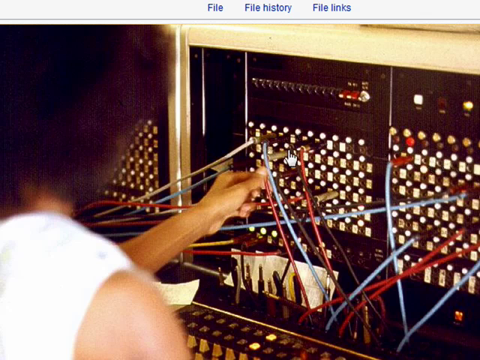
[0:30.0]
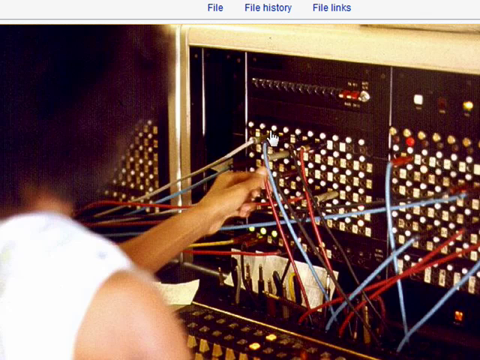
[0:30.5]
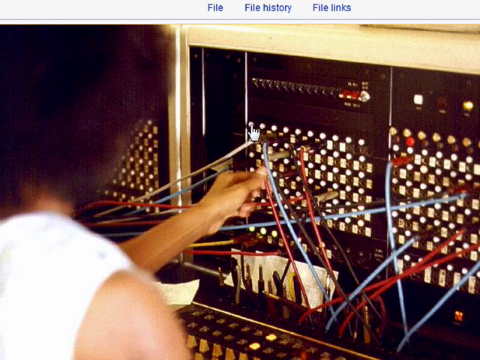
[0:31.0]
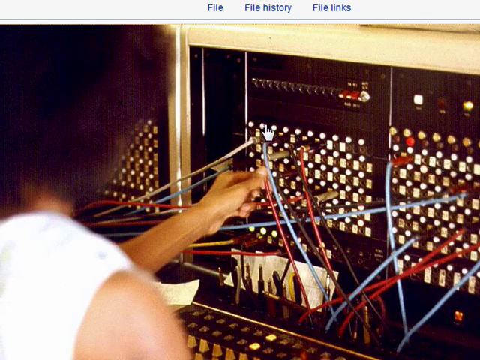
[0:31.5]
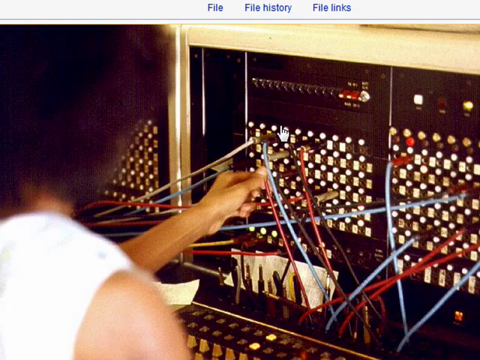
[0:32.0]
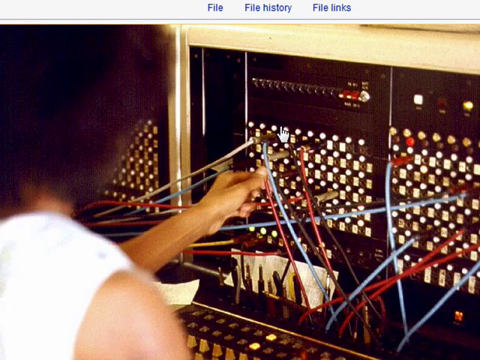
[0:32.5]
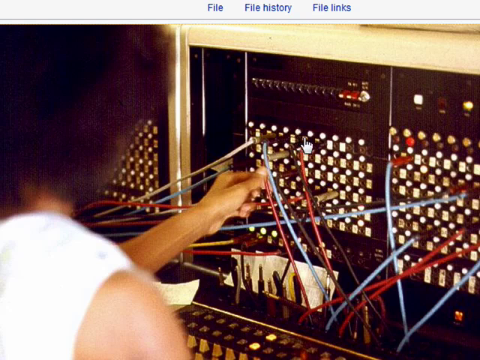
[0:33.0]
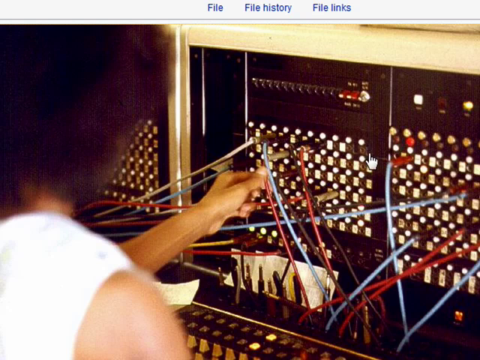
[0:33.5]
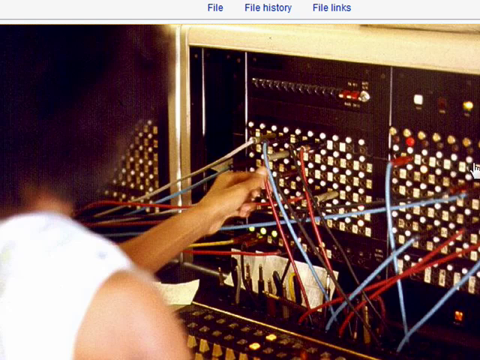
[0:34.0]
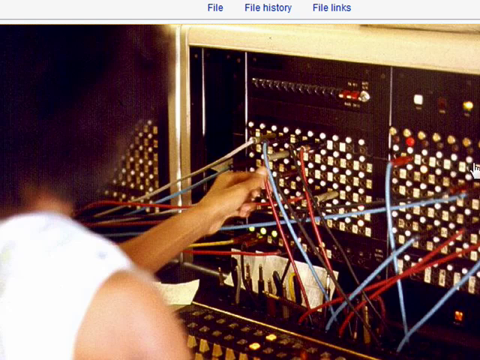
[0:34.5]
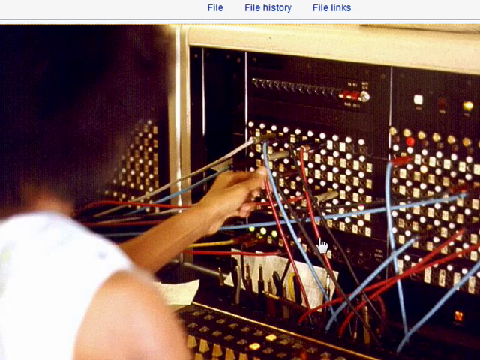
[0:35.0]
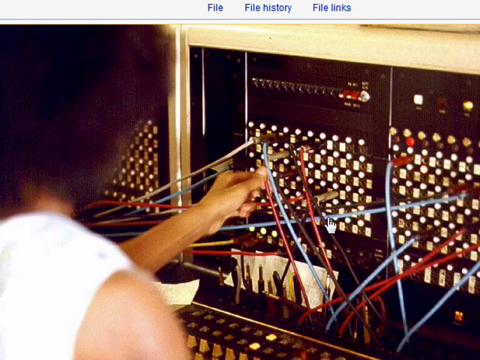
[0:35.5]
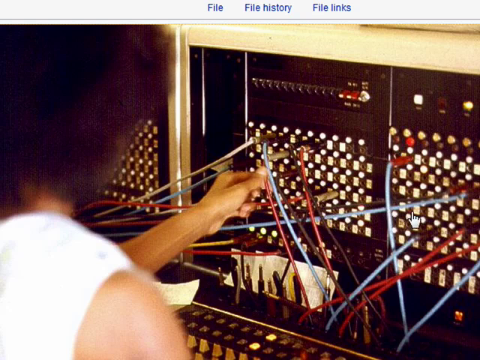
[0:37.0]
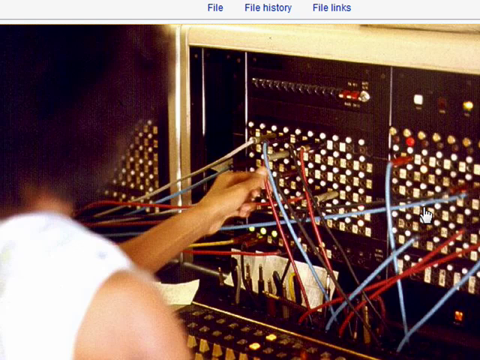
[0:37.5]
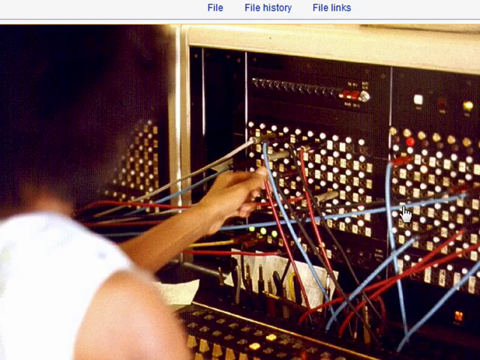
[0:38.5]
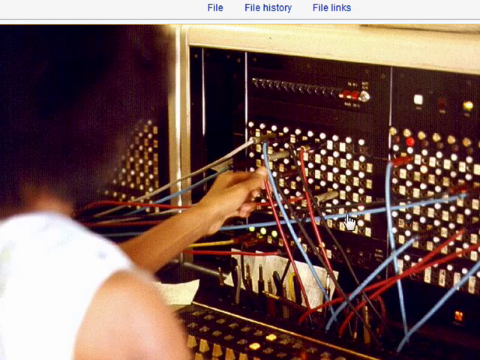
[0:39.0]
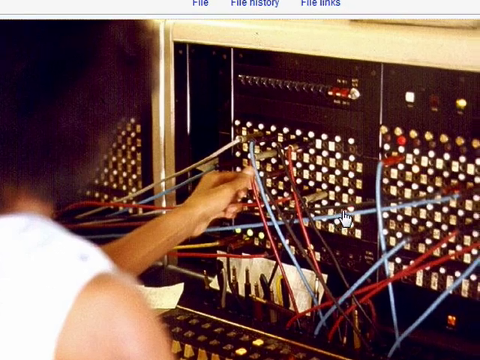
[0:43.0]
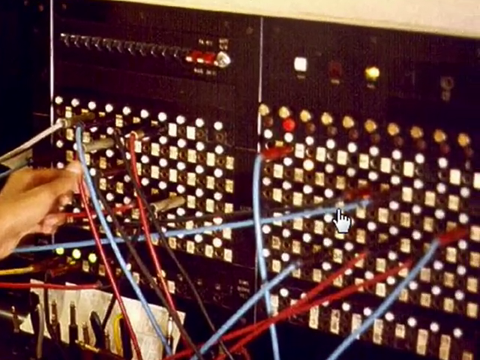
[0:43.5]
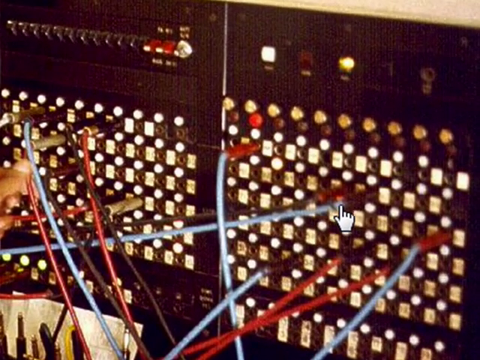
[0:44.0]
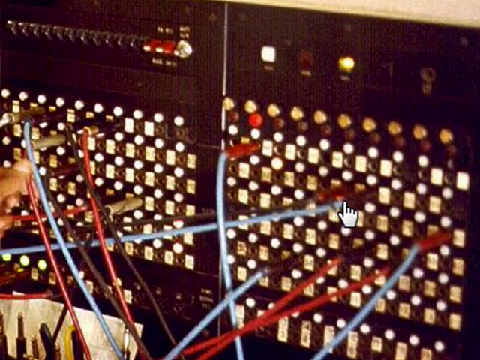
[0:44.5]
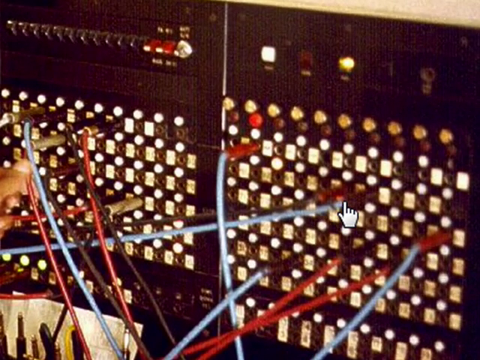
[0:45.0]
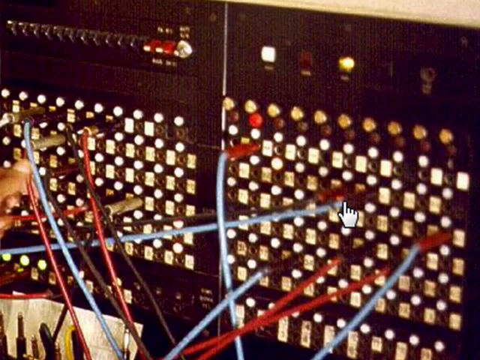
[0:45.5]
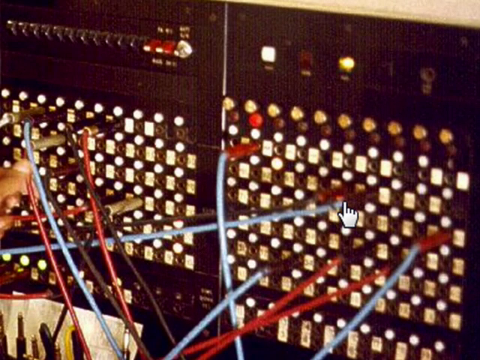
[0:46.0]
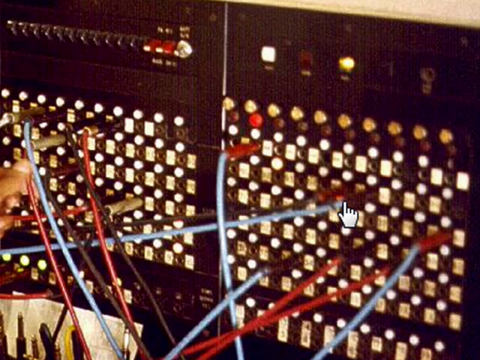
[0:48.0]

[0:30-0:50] An image shows an old-fashioned telephone operator, seen from the side on the left of the frame. She has a large afro and wears a sleeveless white top. With her left hand she is touching one of the switch wires of the switchboard. Lots of blue, red and white wires or cables are attached to different ports on the switchboard. A hand-shaped mouse pointer, with the index finger extended, hovers all over the image, moves over one of the blue horizontal cables, and then touches one of the cable ports. The switchboard has lots and lots of ports arranged in rows and columns, into which telephone wire connections can be plugged in this old analog telephone system.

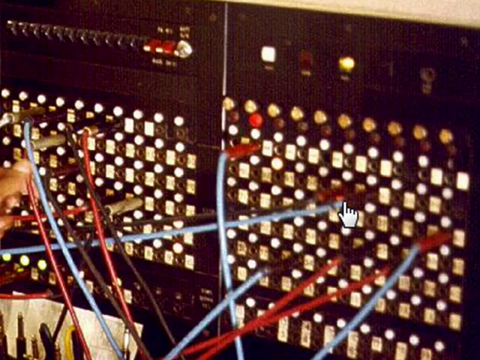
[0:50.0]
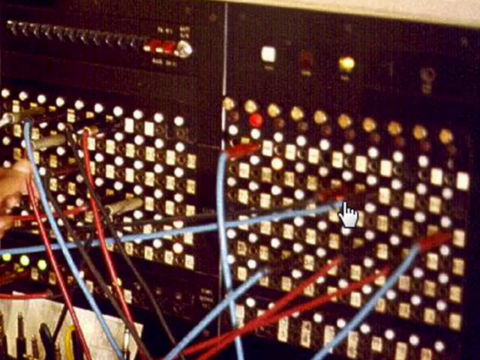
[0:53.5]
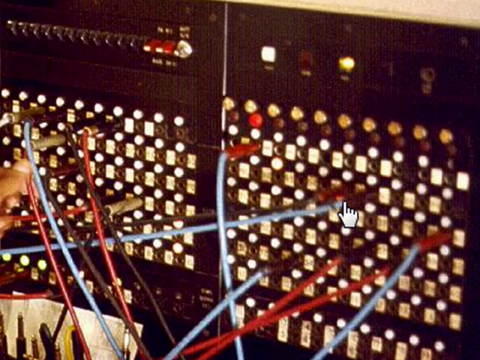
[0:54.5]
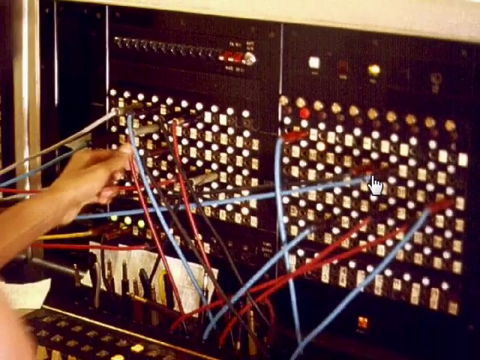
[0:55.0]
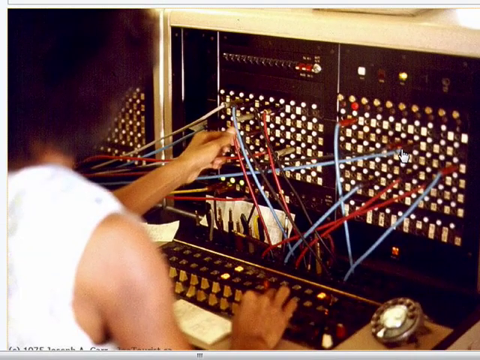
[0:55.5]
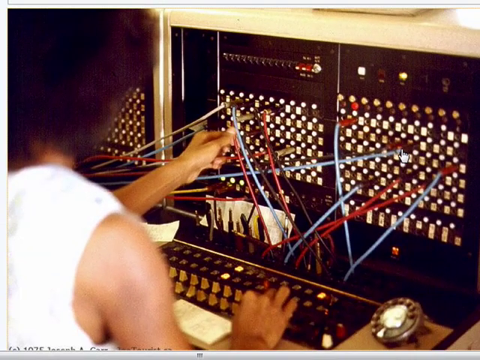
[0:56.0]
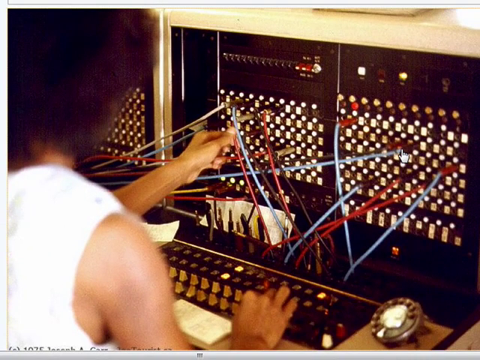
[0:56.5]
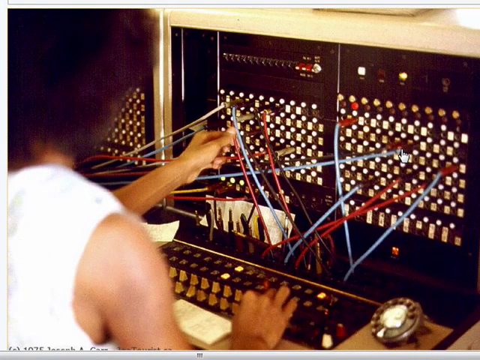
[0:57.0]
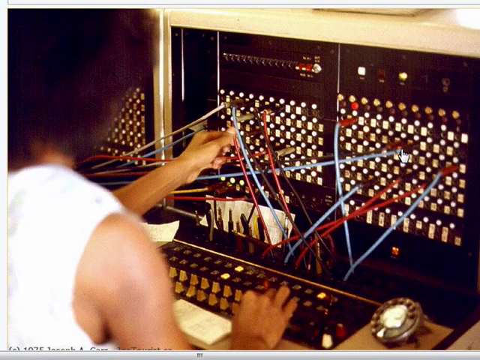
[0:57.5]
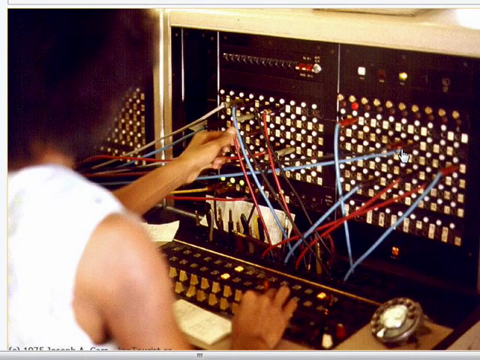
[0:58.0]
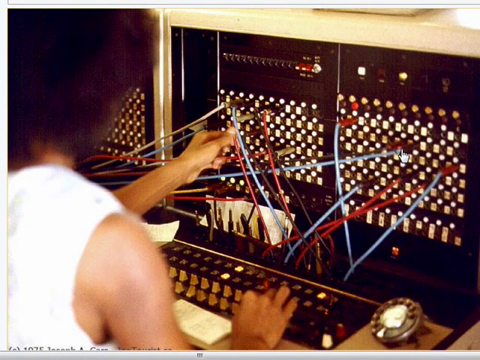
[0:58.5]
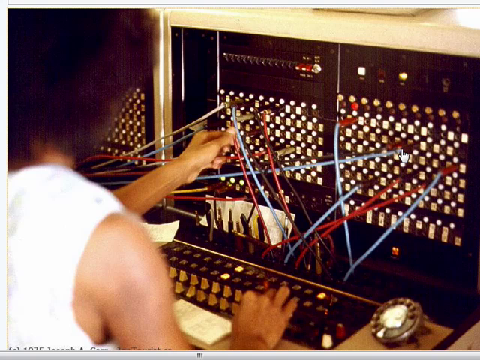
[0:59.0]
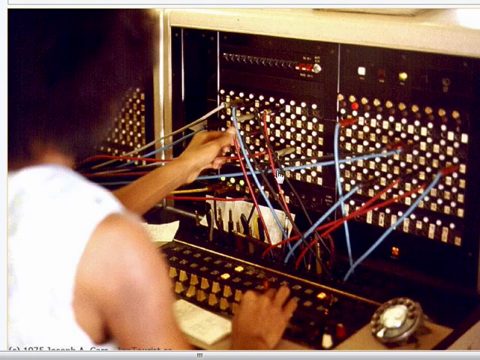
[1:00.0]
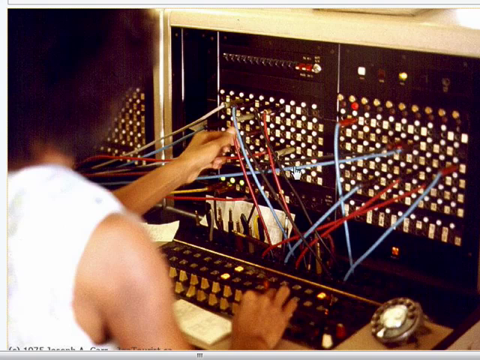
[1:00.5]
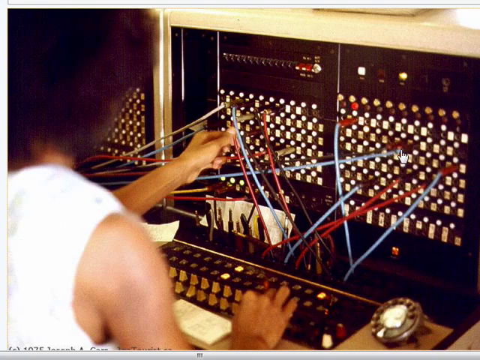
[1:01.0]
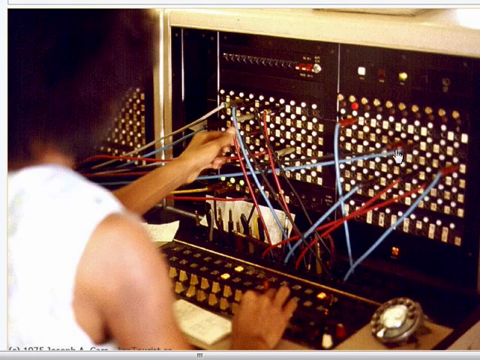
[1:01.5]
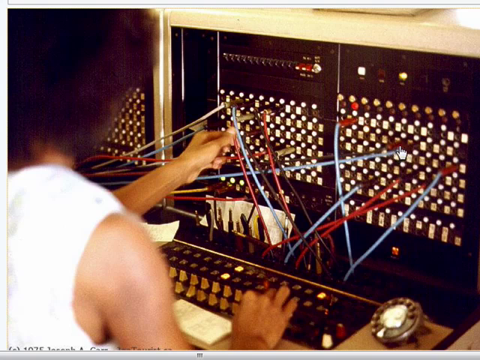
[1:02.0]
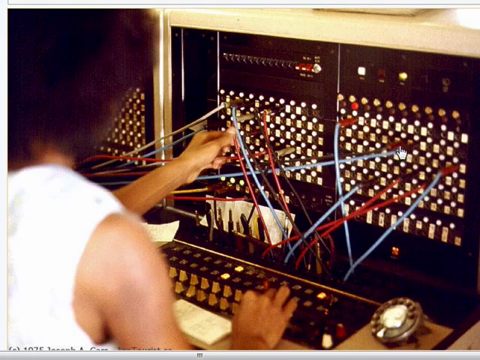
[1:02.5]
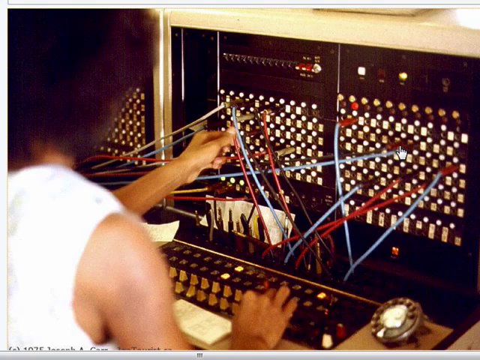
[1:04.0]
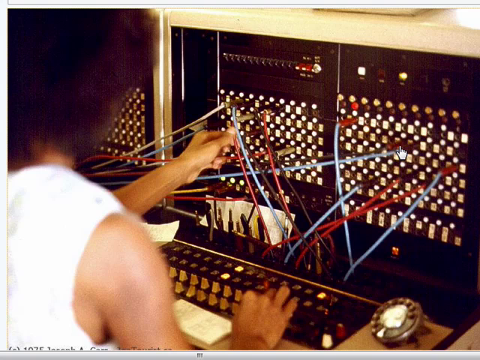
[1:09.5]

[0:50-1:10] A close-up view shows the image of an old-fashioned analog telephone switchboard. The switchboard is dark brown and has rows and rows of holes, hundreds of them, into which cables can be plugged to make telephone connections. Some red, black and blue cables are plugged in. The image stays on screen for a while with a mouse pointer resting on it. The camera pans out on the image, revealing the back of the right shoulder and arm and the afro hairstyle of the telephone operator. She wears a white sleeveless top. With her left hand she holds onto one of the cables connected to the switchboard, and her right hand rests on the lower part of the switchboard. The mouse pointer icon hovers on the screen.